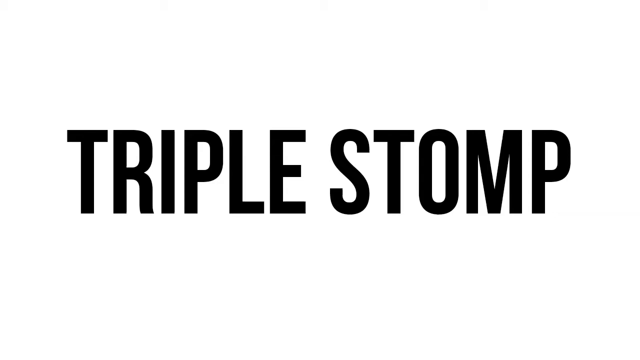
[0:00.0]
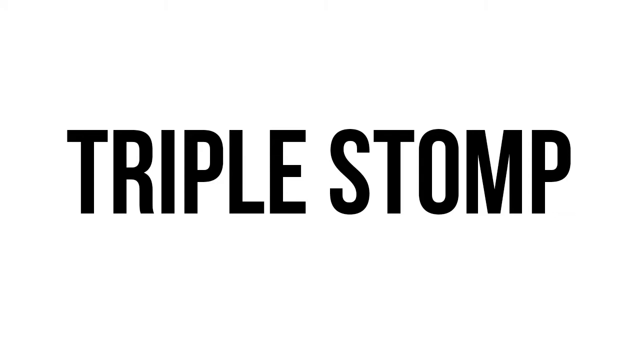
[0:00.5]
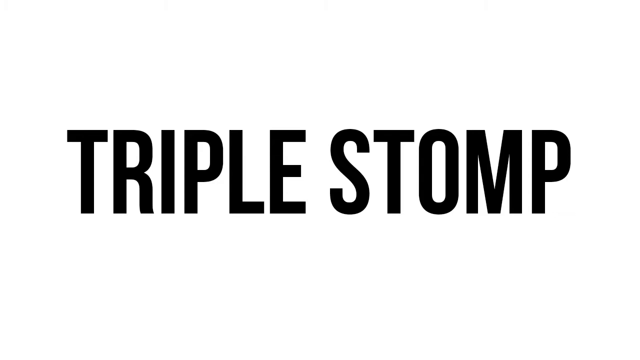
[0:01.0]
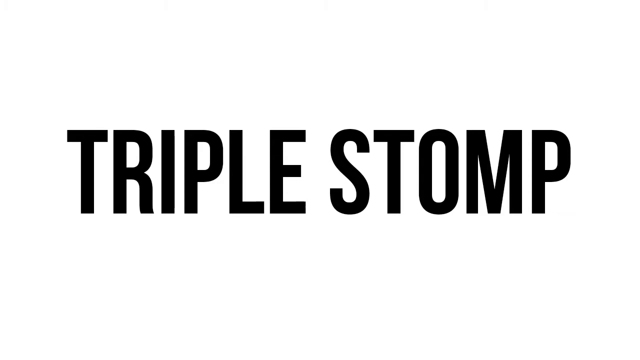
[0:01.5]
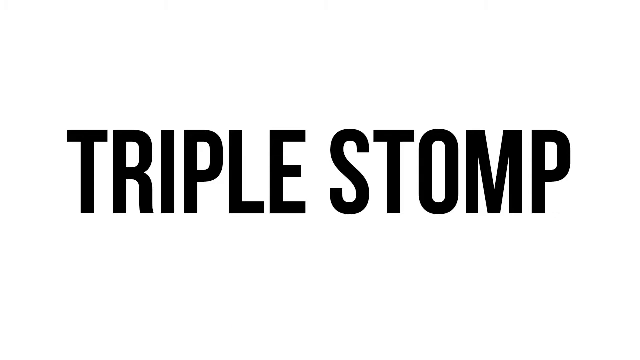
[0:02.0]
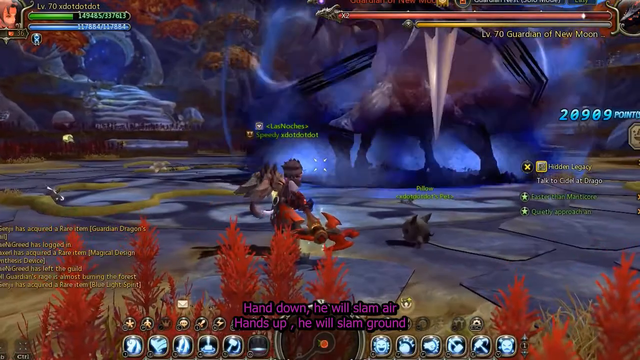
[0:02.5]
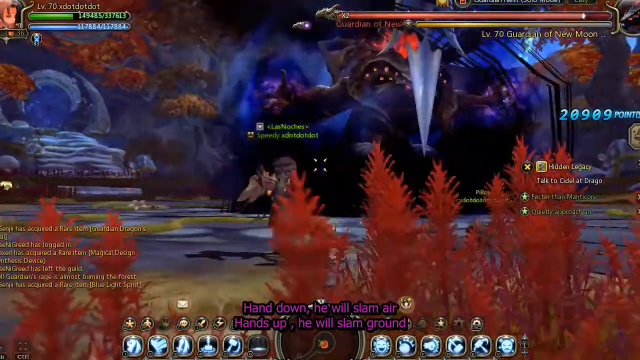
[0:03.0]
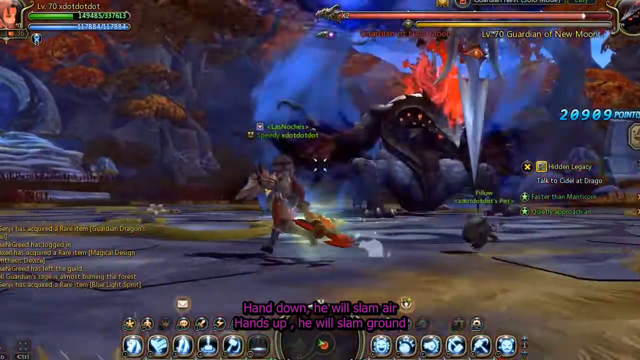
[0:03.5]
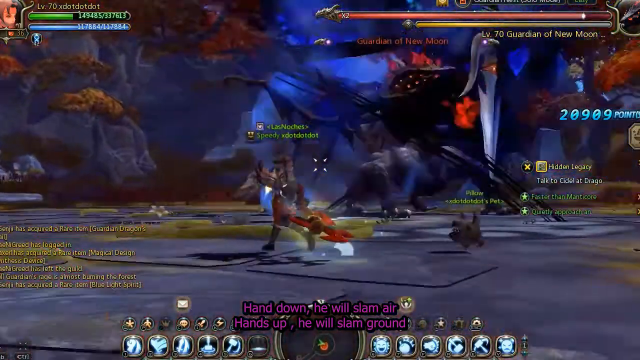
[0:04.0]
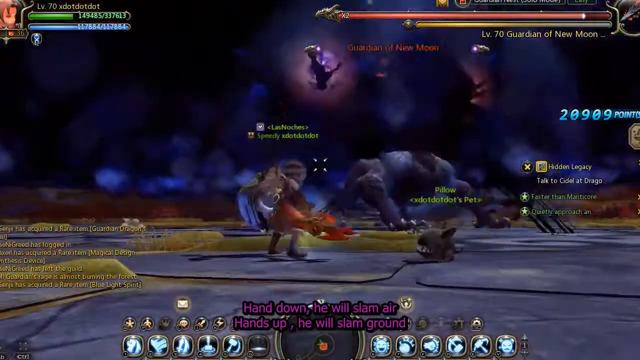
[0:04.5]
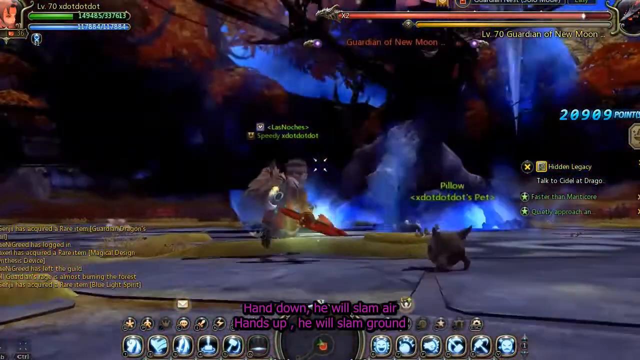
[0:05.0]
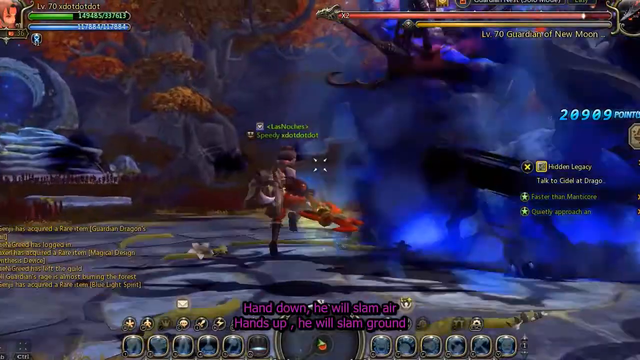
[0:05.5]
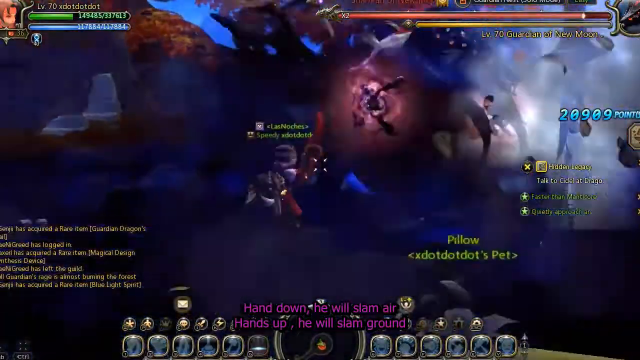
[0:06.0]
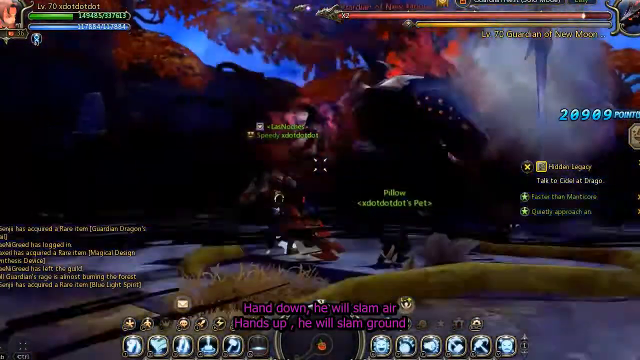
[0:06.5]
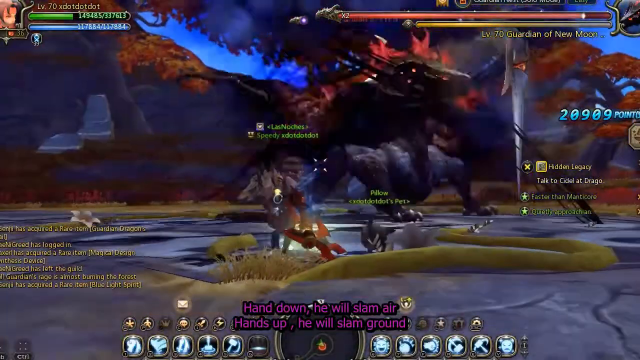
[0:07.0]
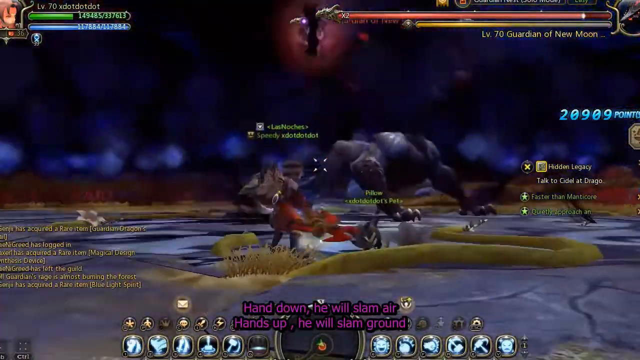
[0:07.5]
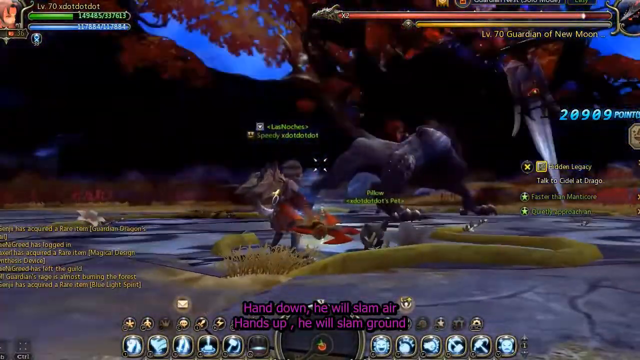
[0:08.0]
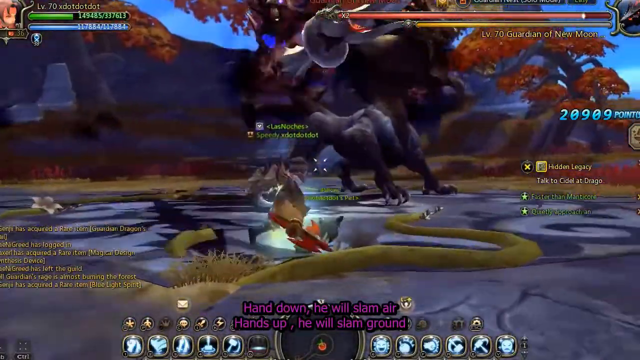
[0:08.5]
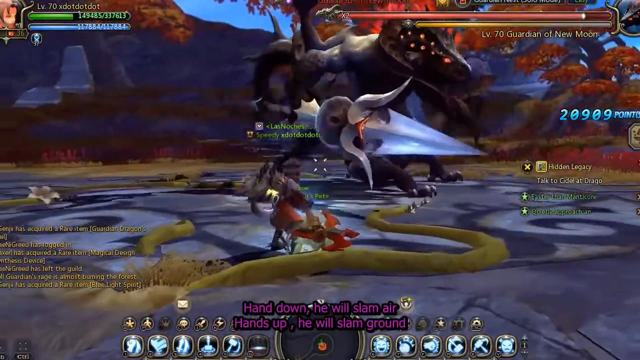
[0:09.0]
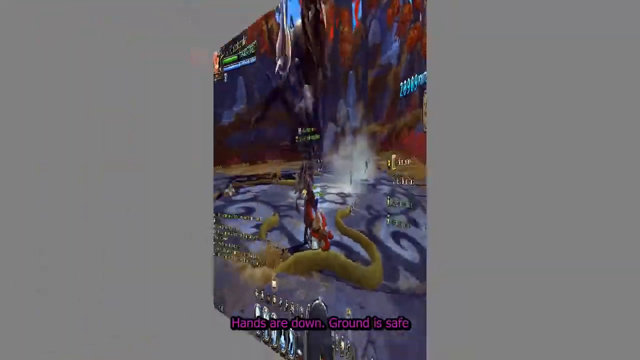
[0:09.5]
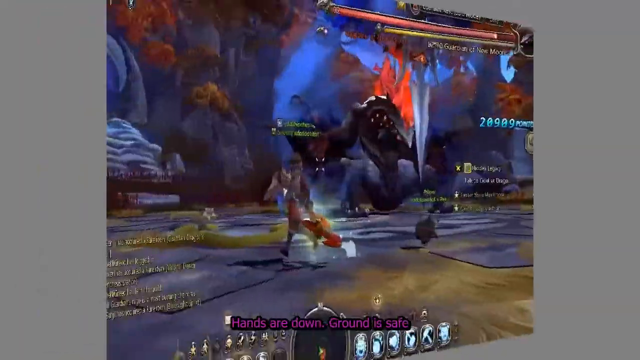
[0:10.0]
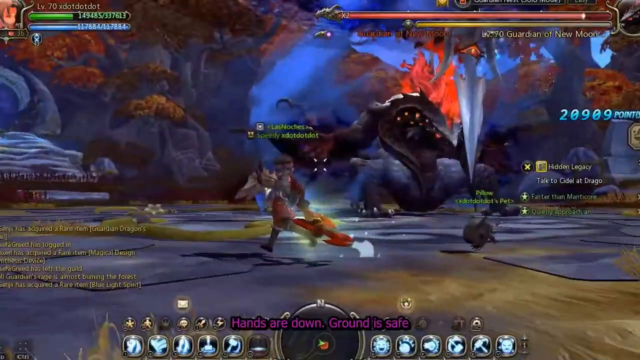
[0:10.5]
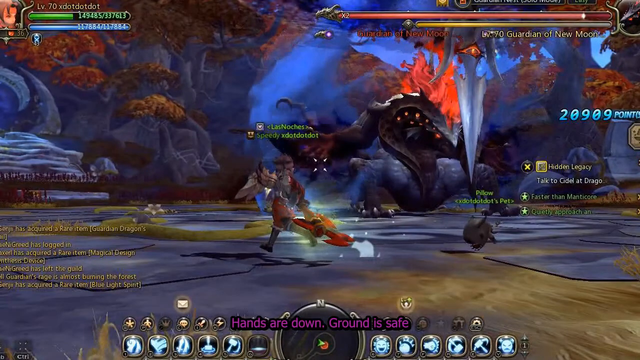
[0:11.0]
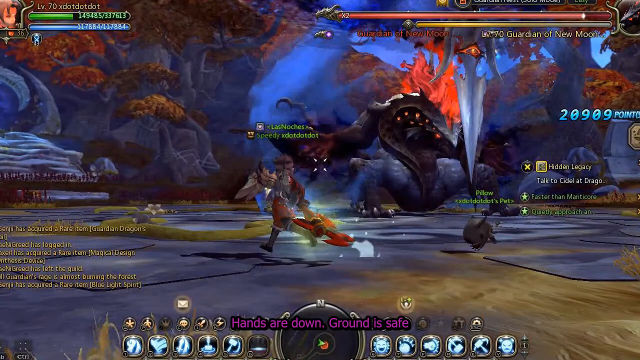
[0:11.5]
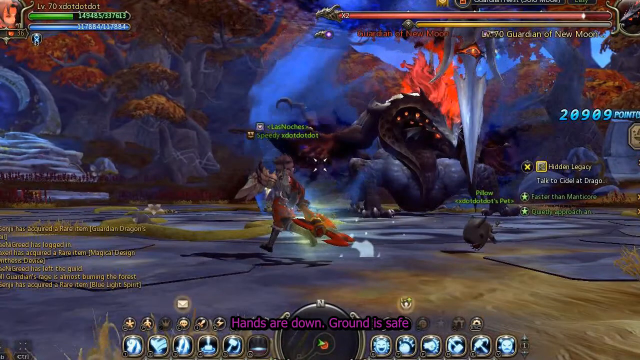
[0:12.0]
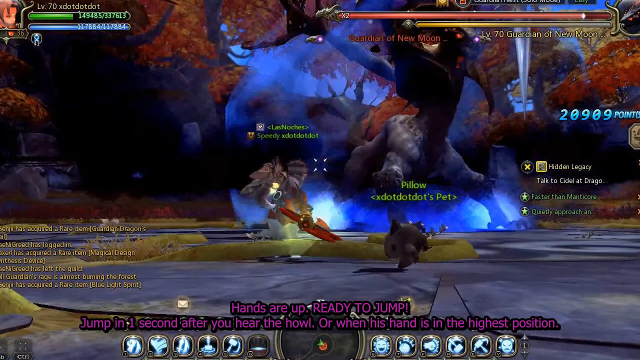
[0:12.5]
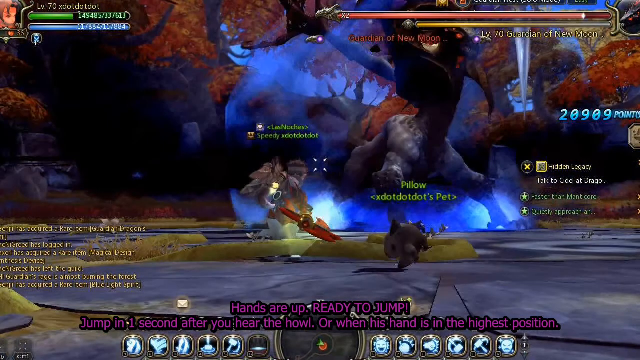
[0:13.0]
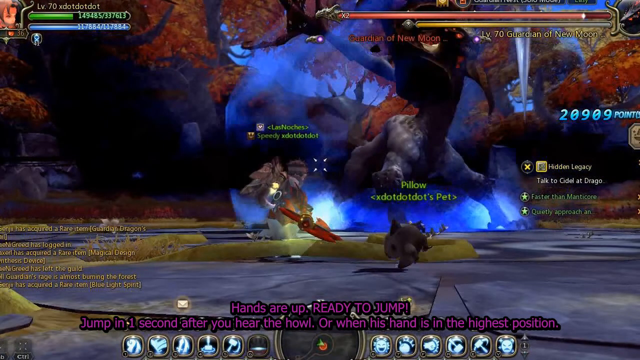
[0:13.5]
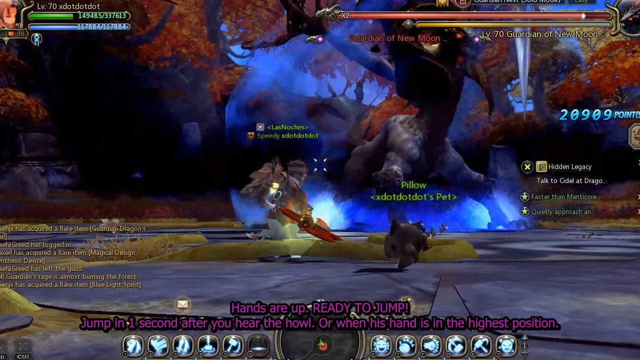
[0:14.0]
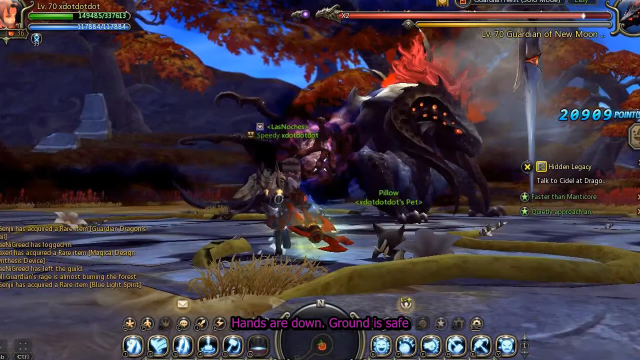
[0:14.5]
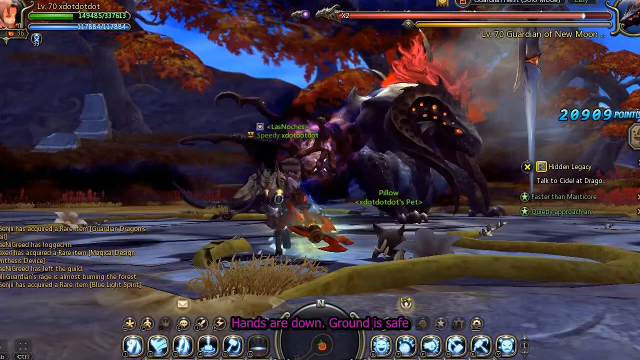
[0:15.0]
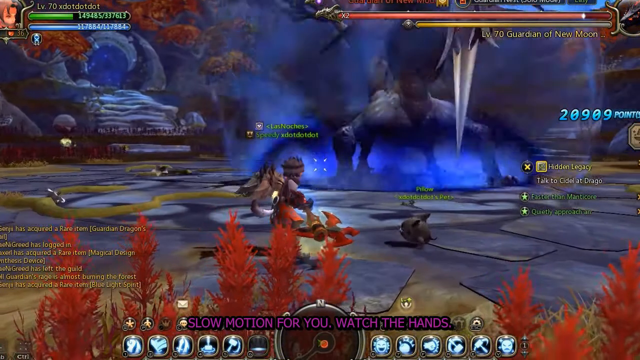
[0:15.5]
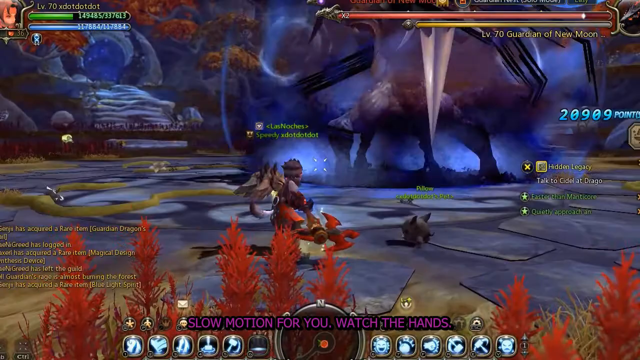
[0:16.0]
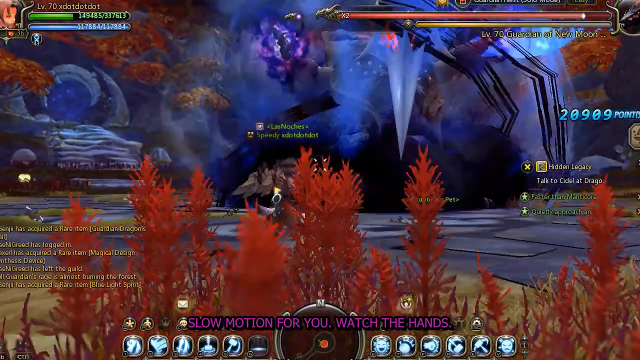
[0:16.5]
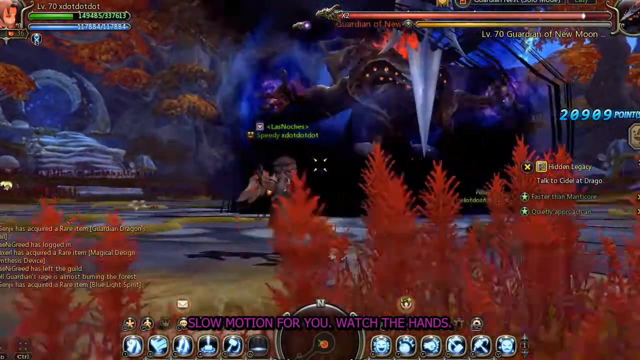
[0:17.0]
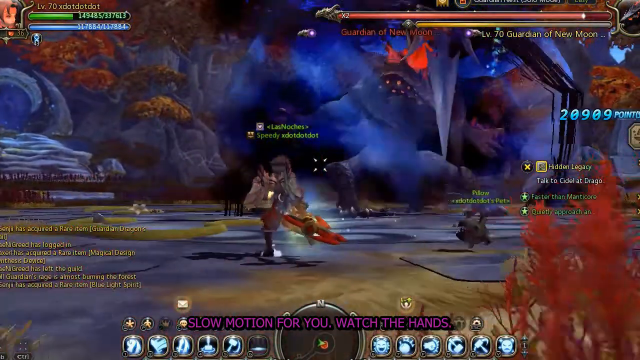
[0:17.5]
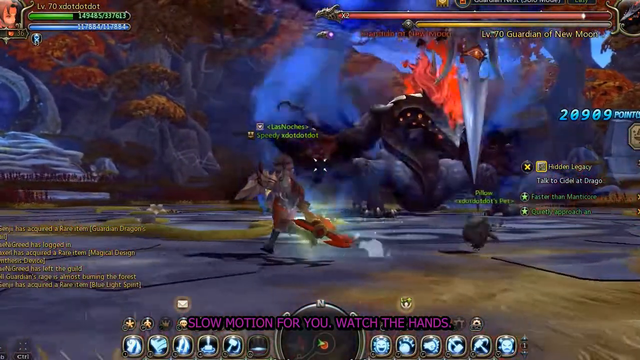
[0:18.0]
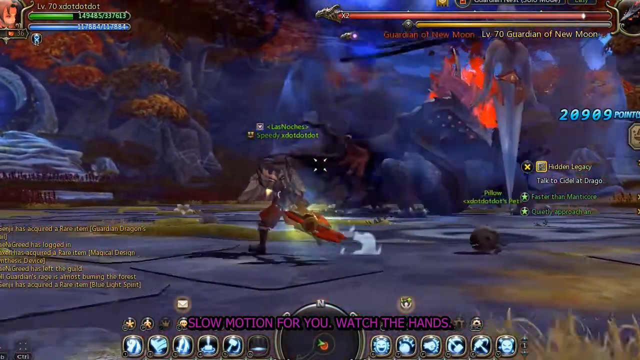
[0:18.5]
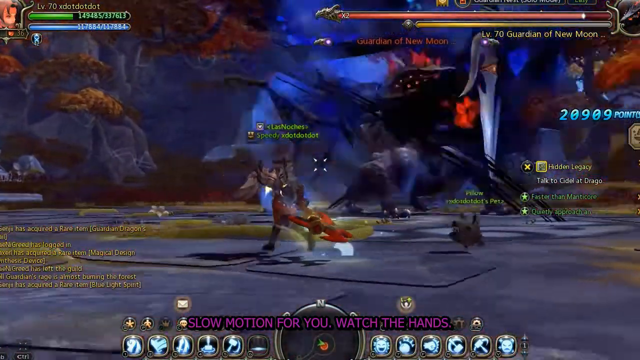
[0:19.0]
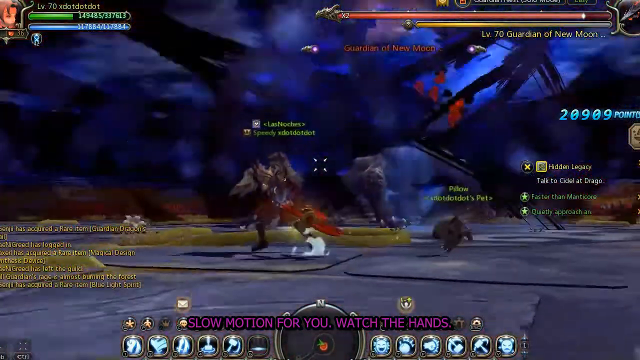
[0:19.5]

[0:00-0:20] The video opens with a white screen showing large black print in the middle, a title given as Tickle Stomp and spelled T-R-I-C-K-E S-T-O-M-P. It is a fantasy video game in which someone plays as a character fighting a very large dragon. A small animal walks around, there seem to be trees in the background, and there is what looks like a hobbit hole of some kind. The graphics and background look quite detailed: there are mountains and a dark night sky, and the leaves on the trees are autumn orange and red. The dragon is very large, holds a very large pointed sword or knife, and looks very dangerous; the fight looks very challenging for the player's character. The setting is fantasy-oriented and apparently somewhat medieval, with all the plants in reds, oranges and golds.